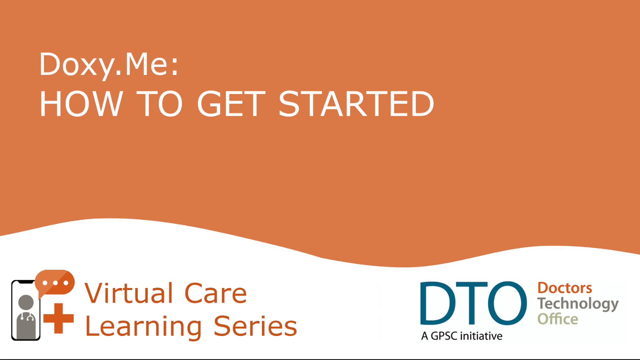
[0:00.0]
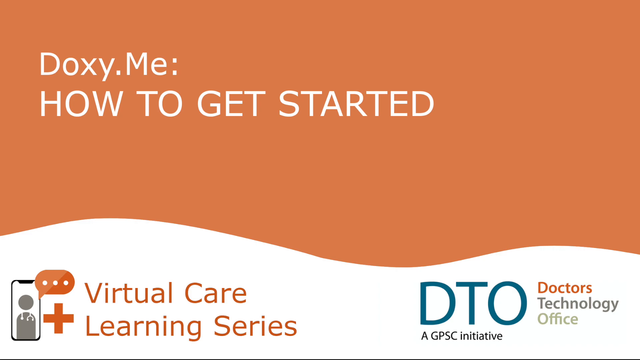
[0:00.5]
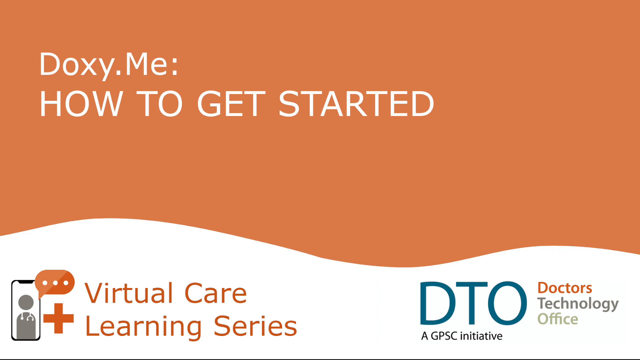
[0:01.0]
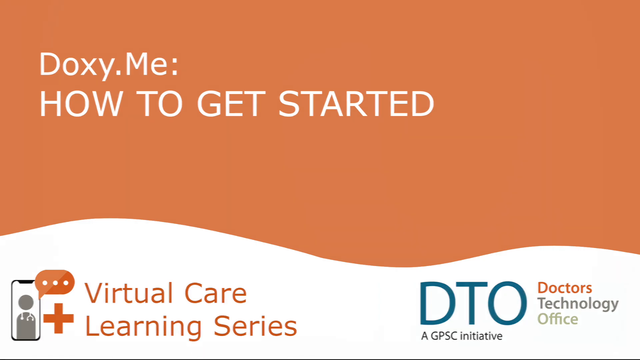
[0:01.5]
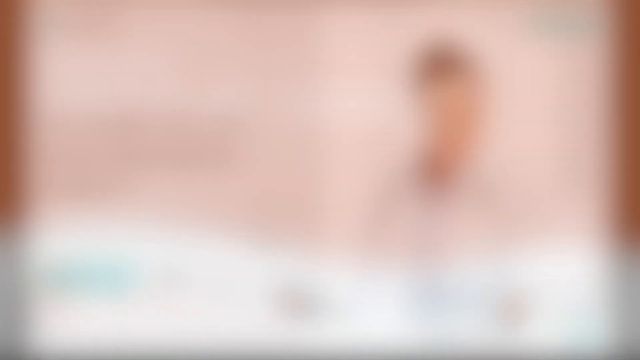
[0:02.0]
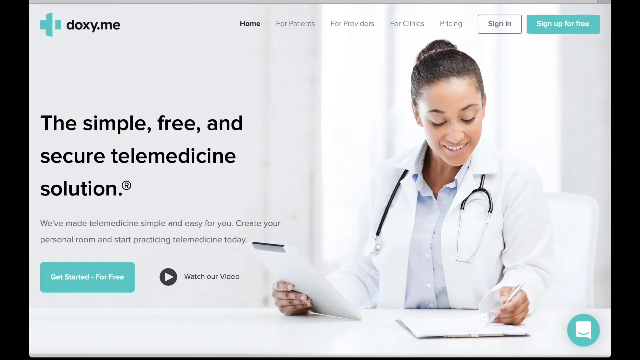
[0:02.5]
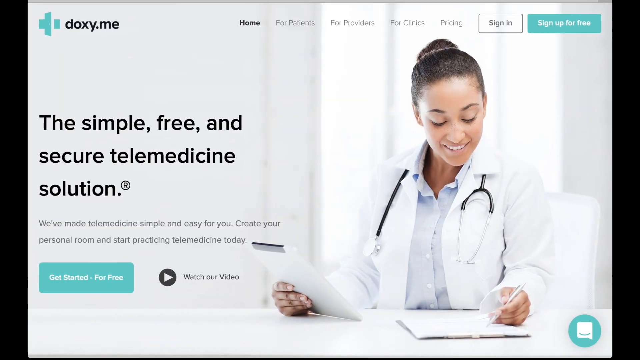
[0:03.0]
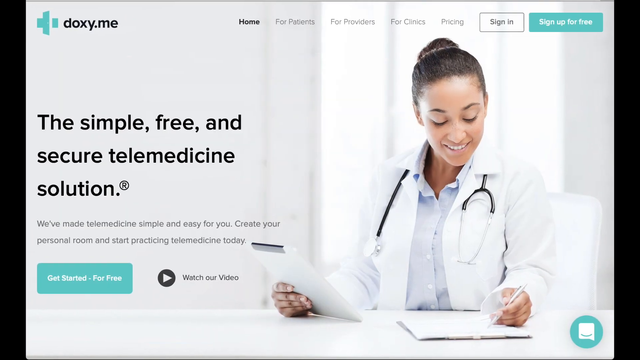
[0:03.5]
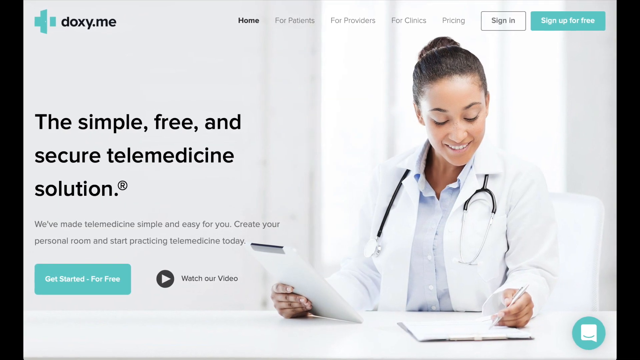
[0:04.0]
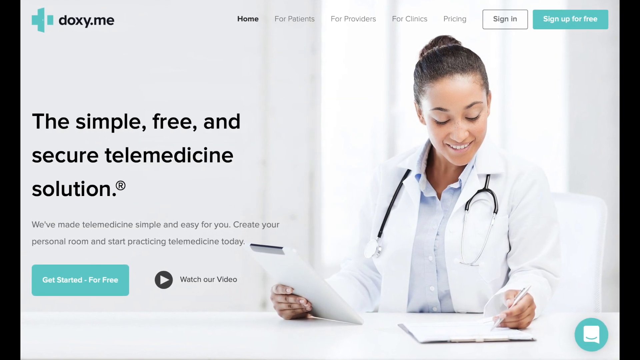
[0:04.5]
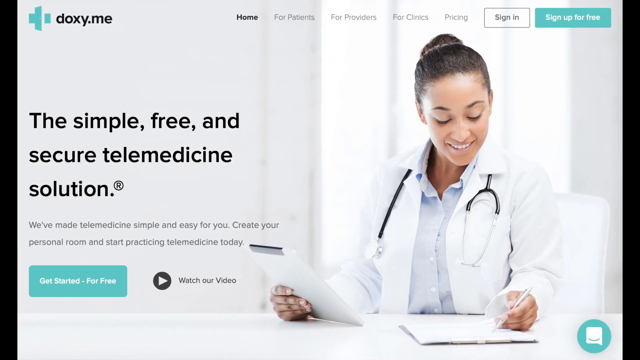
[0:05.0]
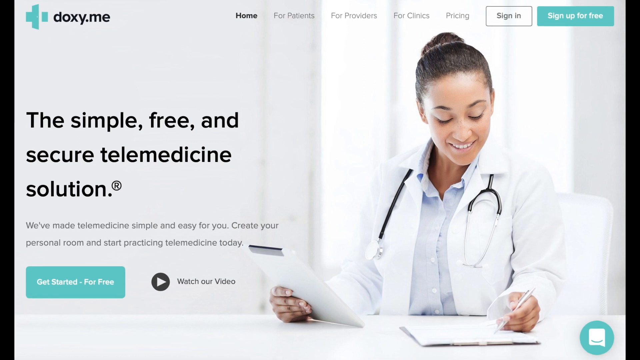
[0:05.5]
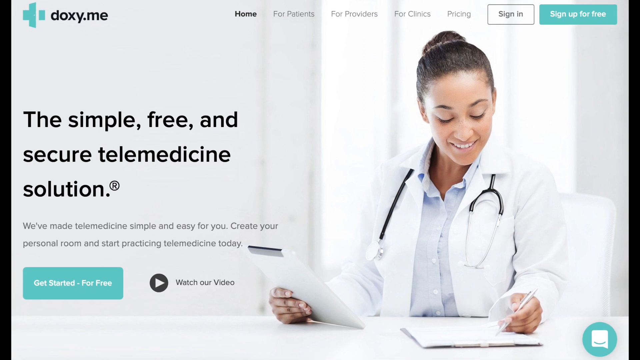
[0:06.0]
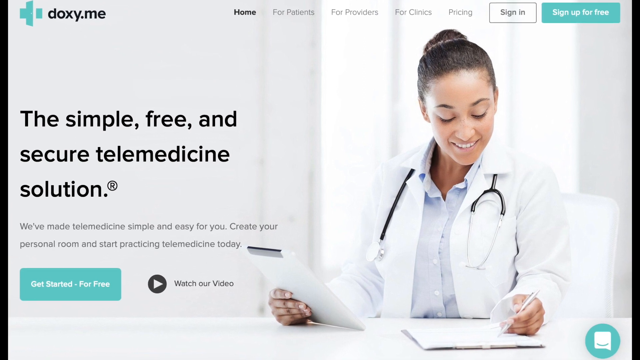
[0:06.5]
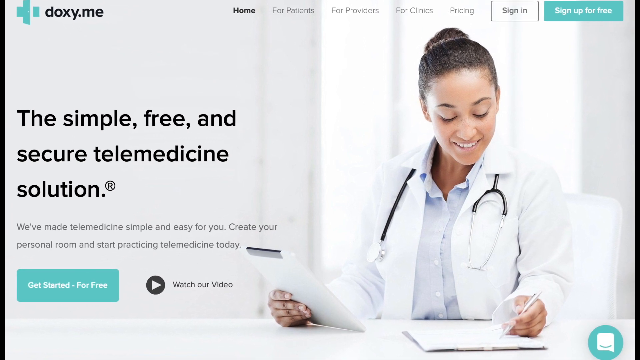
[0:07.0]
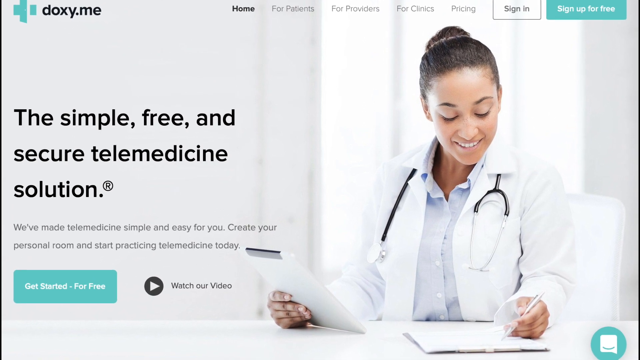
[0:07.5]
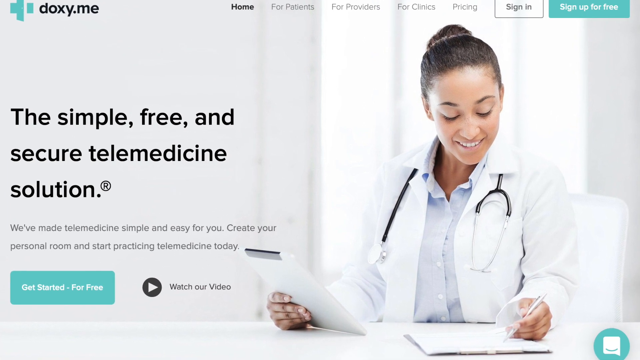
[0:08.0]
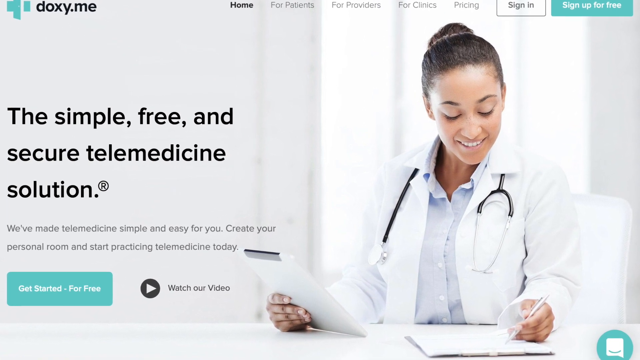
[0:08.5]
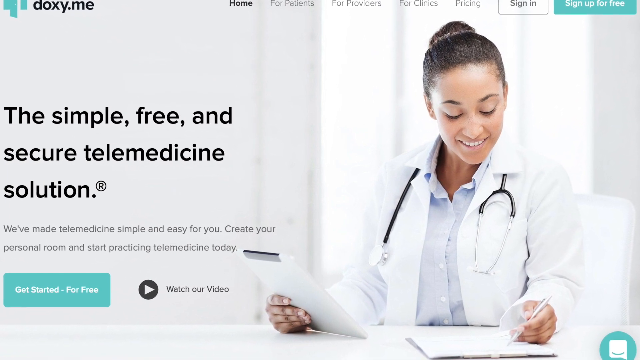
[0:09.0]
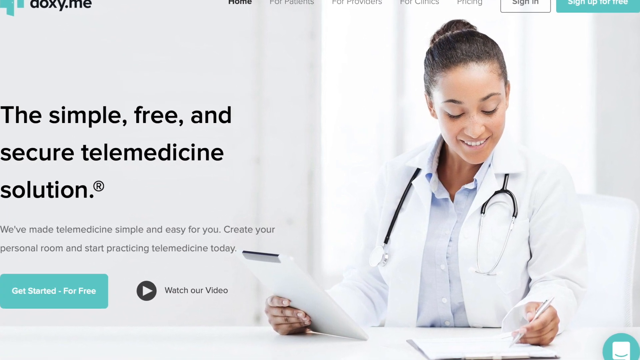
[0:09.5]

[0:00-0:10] The video opens on a background that is orange on the top and white on the bottom. Text over the color reads "doxy.me, how to get started" at the top left. The bottom left says "virtual care" and the bottom right says "DTO, Doctor's Technology Office." The screen then moves to more text. On the right of the screen is a female, either a doctor or a nurse, wearing a stethoscope and a white doctor's coat. Navigation tabs run across the top of the screen, so it appears to be a website. The top left says "doxy.me," and text reads "a simple, free, and secure telemedicine solution."